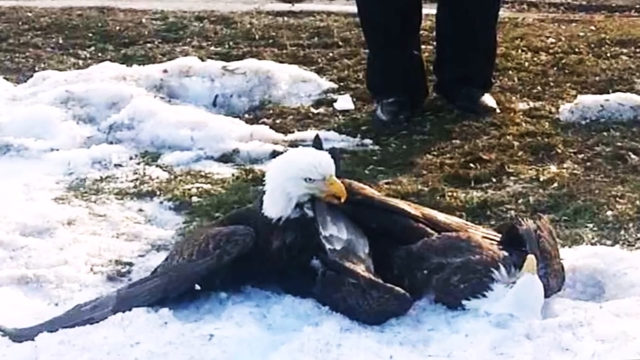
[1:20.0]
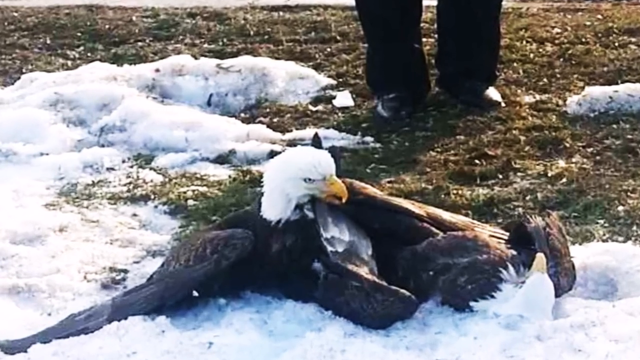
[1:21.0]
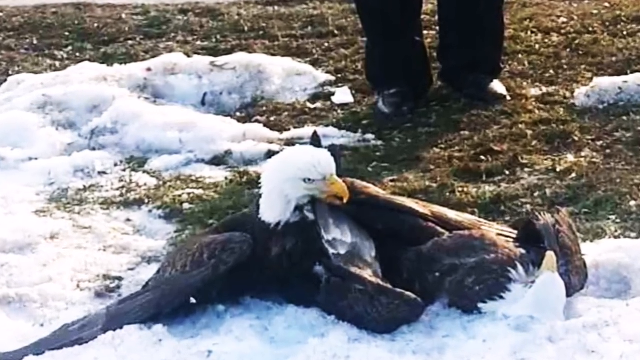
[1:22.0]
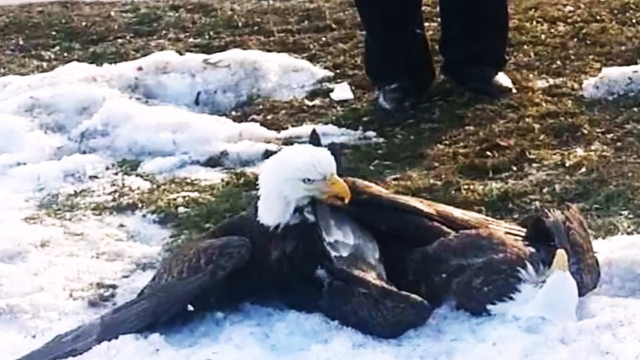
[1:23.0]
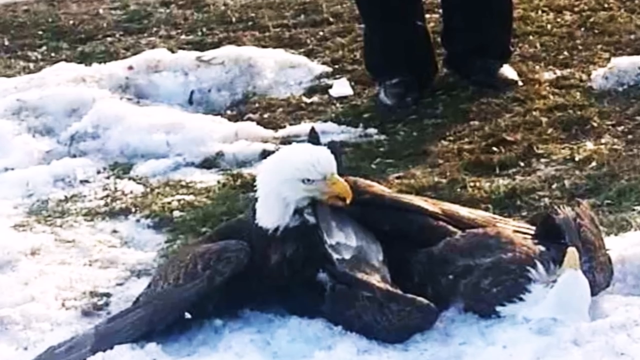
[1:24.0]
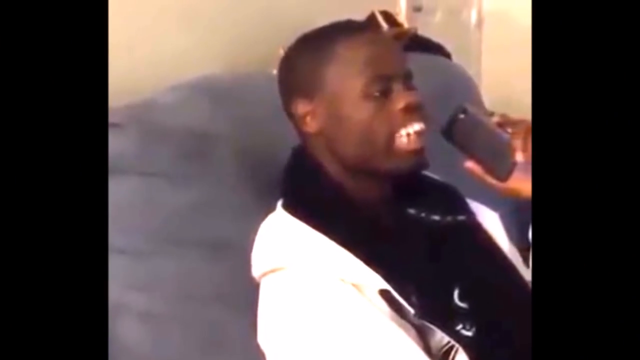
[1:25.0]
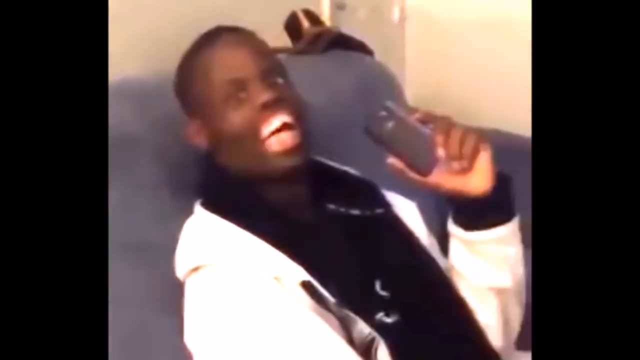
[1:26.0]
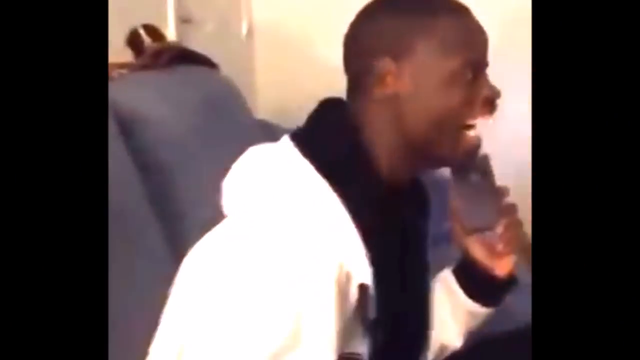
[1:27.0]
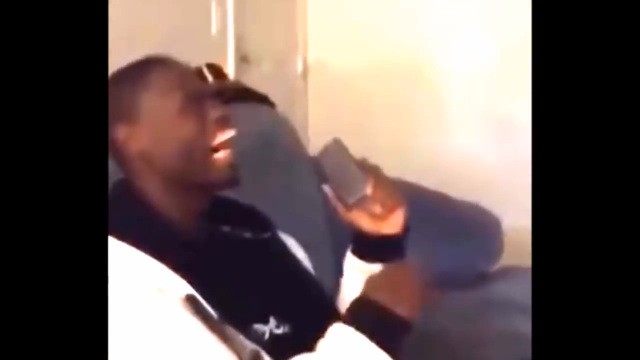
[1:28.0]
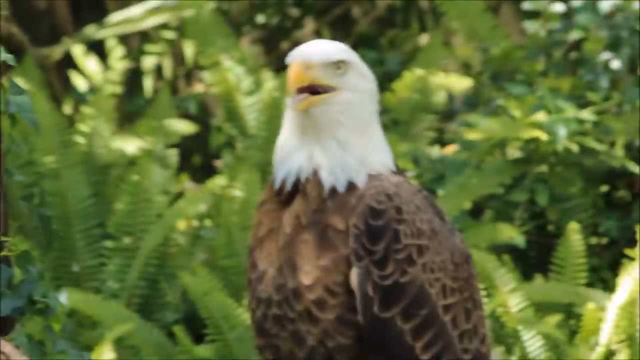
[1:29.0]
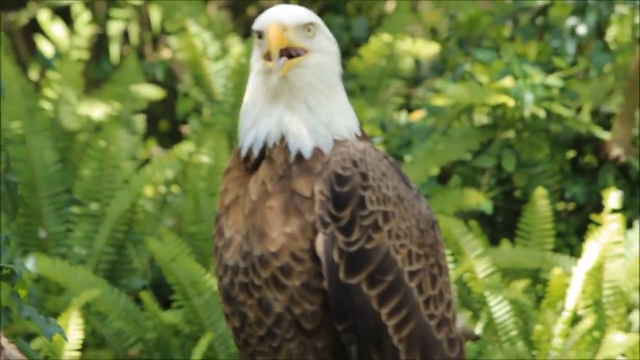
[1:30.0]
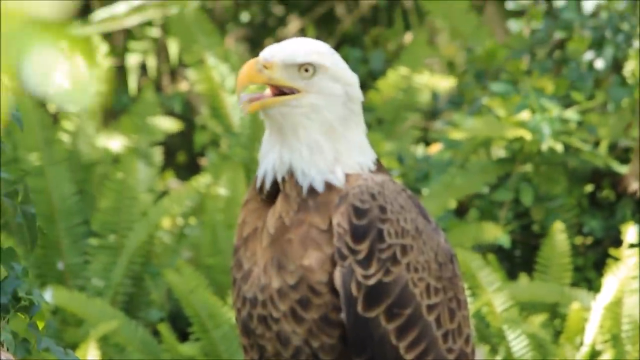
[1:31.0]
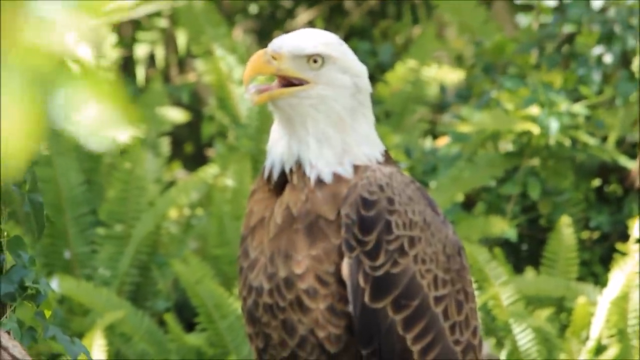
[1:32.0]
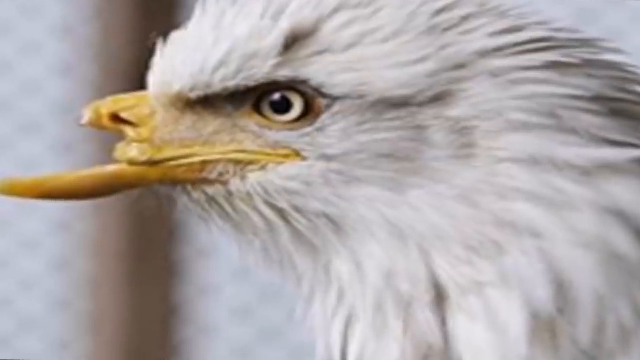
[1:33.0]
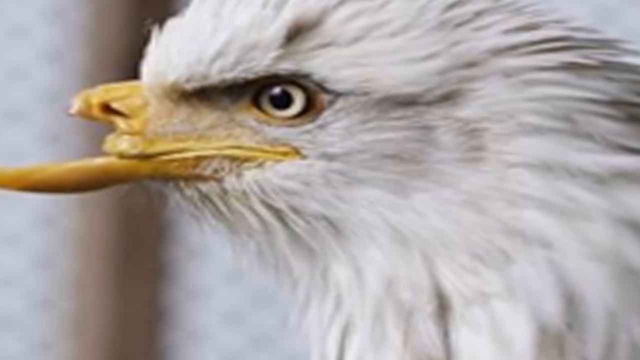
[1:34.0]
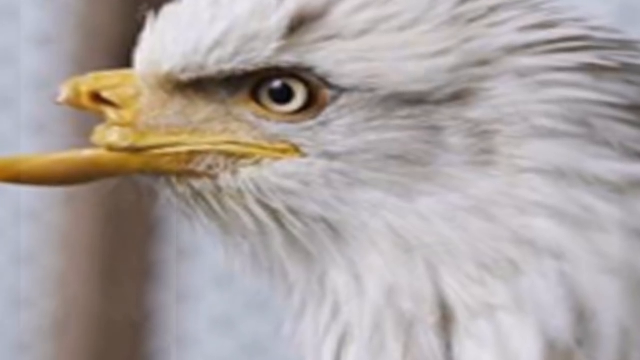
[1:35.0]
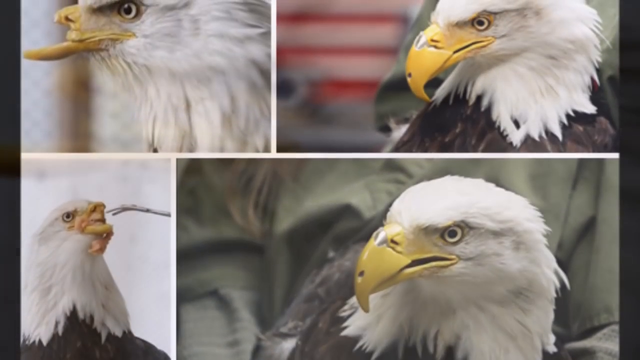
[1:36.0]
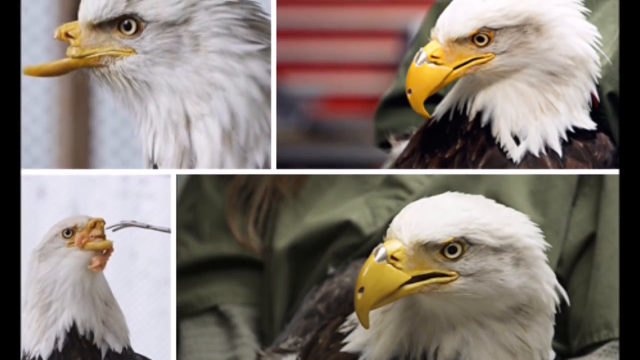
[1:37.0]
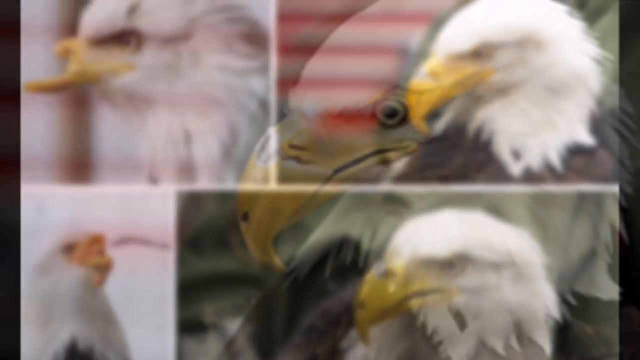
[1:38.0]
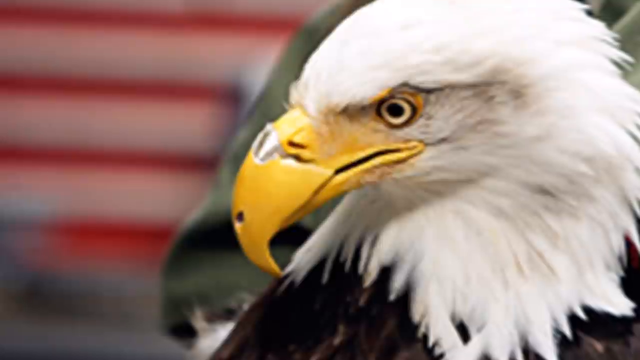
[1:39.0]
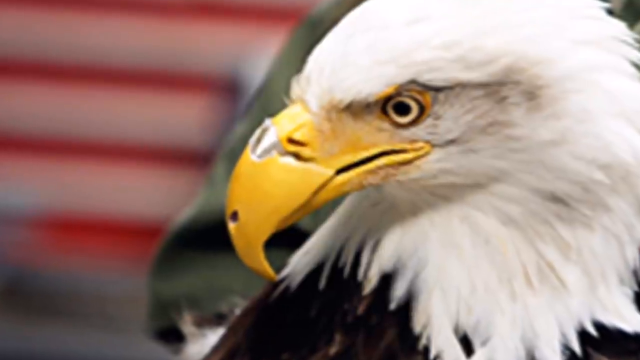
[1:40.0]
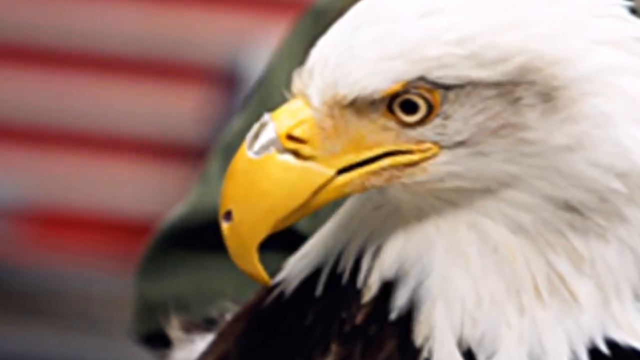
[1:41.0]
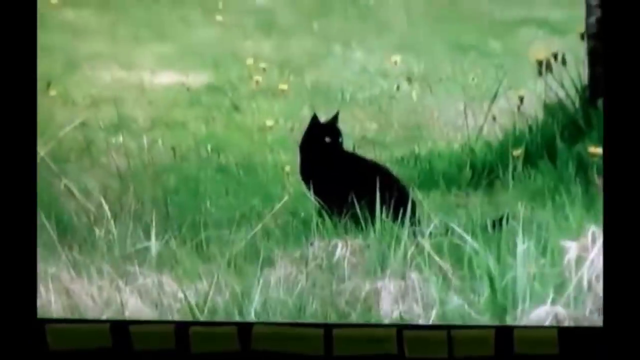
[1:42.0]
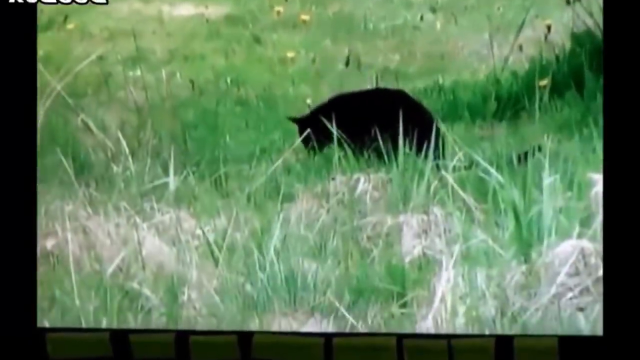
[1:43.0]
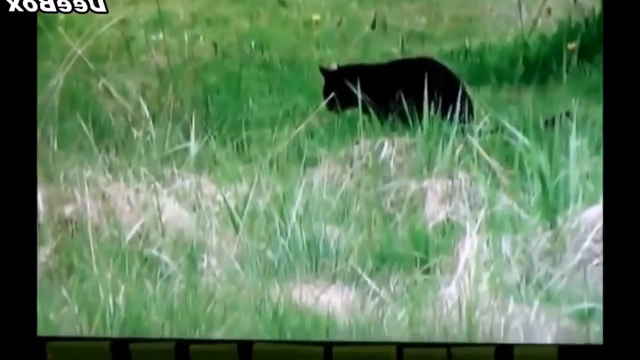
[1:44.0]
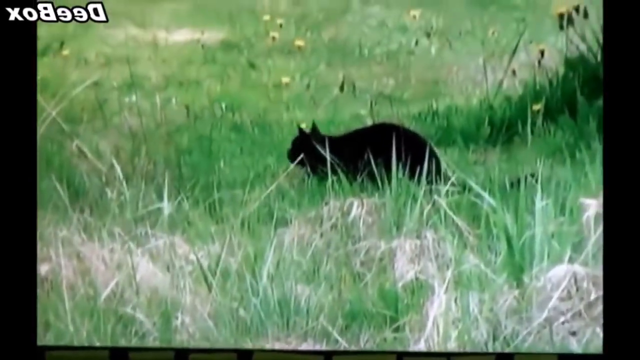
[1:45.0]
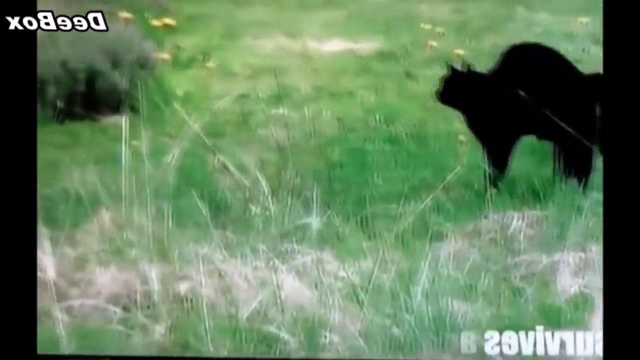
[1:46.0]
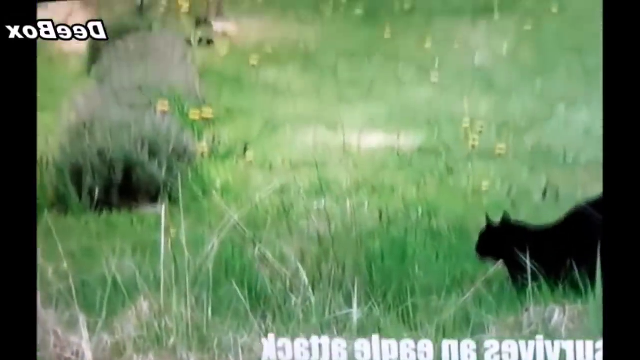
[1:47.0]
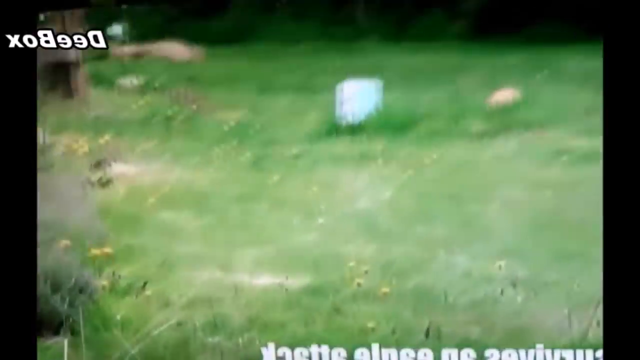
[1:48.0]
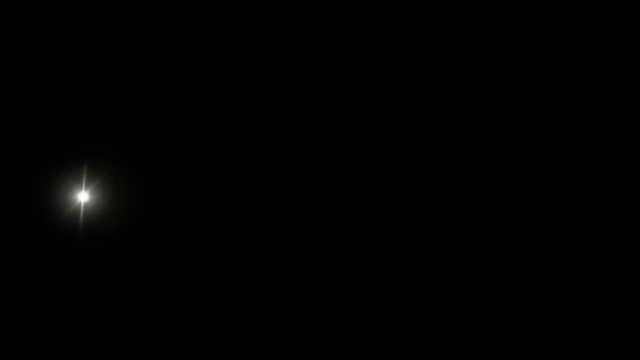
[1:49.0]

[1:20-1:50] The eagle has landed in a snowy place, with something underneath its wing; it is unclear whether this is a duck or its wings. The man who was taking the picture of the bald eagle is in the back. Next, another man laughs and talks on the phone; he wears a white jacket with a black inside, like a hoodie or sweatshirt. The bald eagle looks around; it has a very white head, a yellow beak and brown feathers, with plants and leaves of many kinds behind it. A picture shows a bald eagle with the top part of its beak broken off, and then the eagle fitted with an artificial beak. A black cat appears to be getting ready to pounce, and an eagle flies in, about to swoop up the cat. A light flare appears on screen and words transition in.